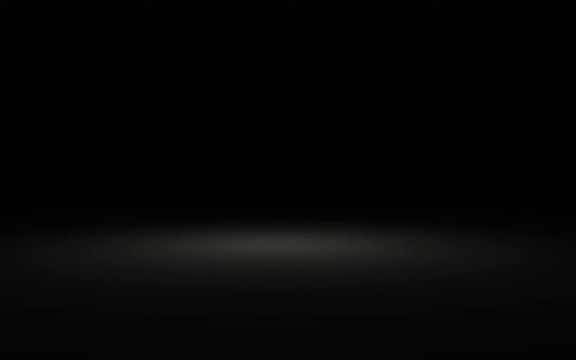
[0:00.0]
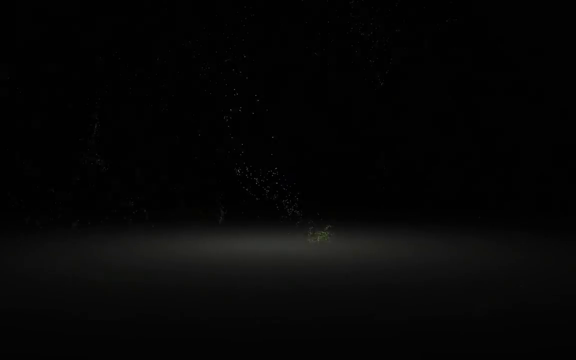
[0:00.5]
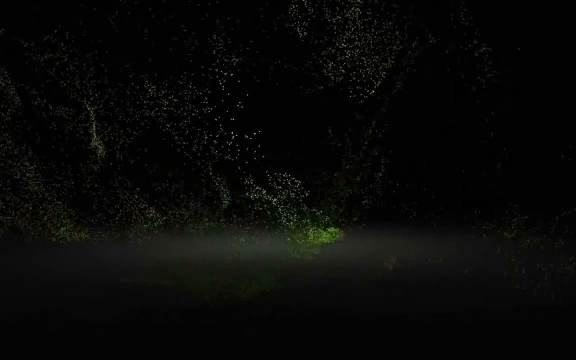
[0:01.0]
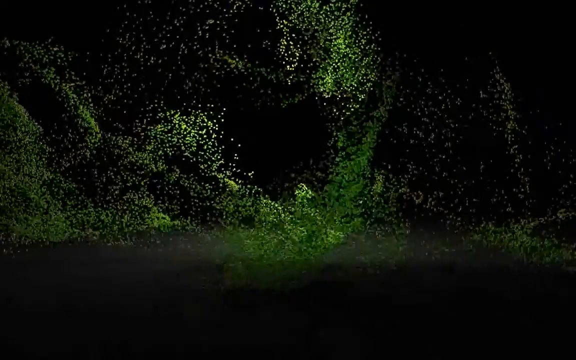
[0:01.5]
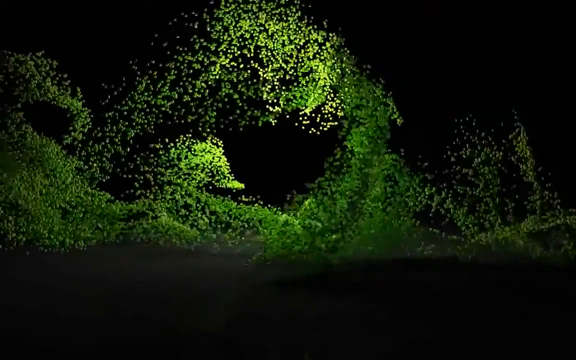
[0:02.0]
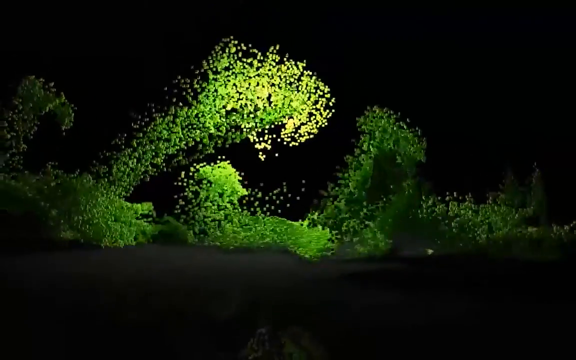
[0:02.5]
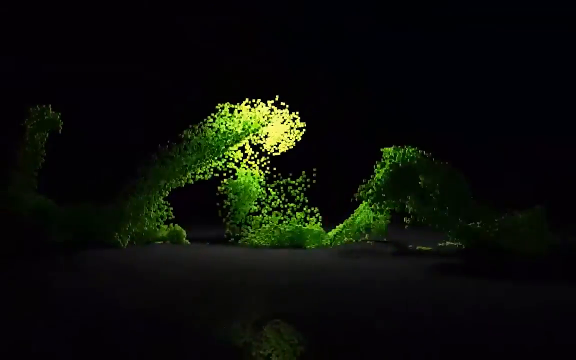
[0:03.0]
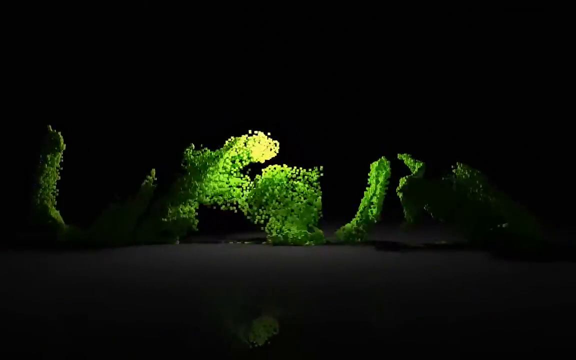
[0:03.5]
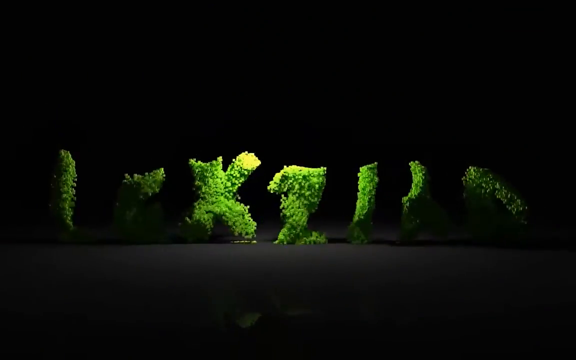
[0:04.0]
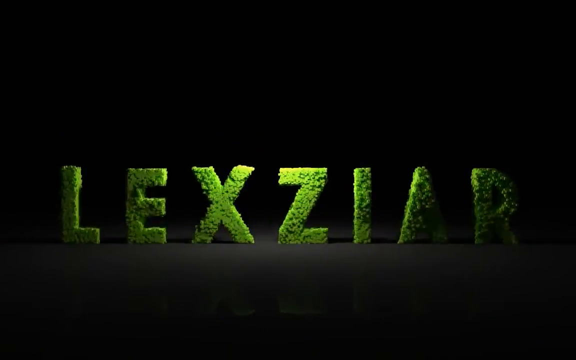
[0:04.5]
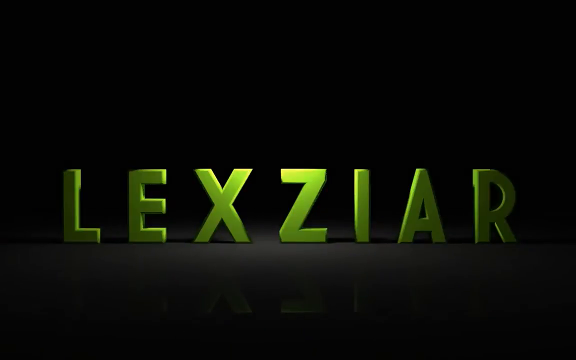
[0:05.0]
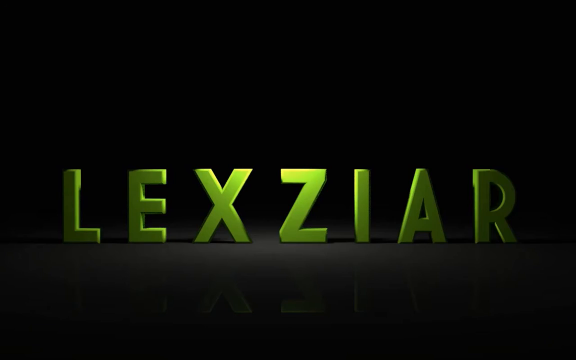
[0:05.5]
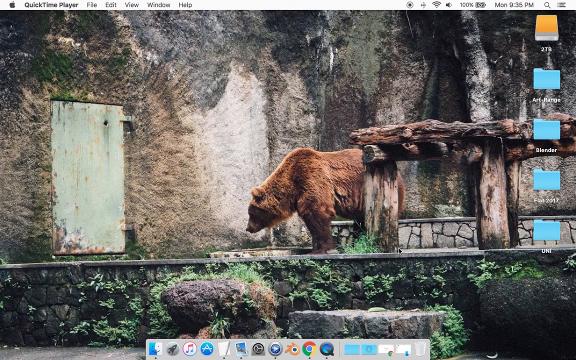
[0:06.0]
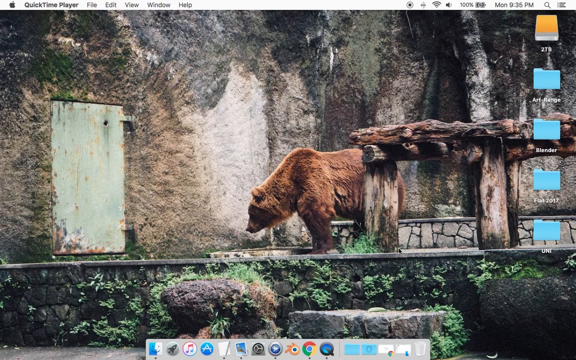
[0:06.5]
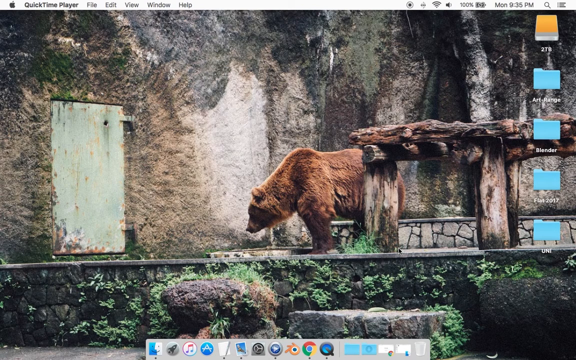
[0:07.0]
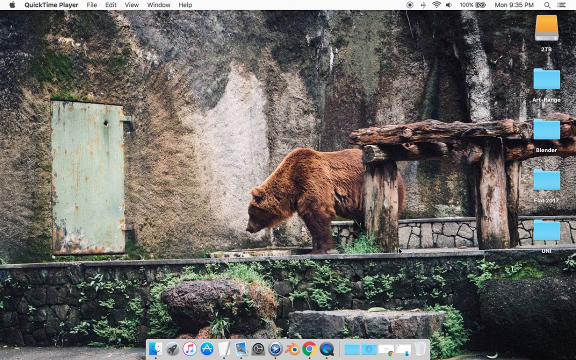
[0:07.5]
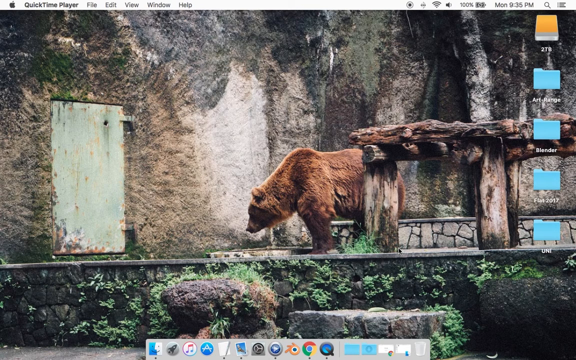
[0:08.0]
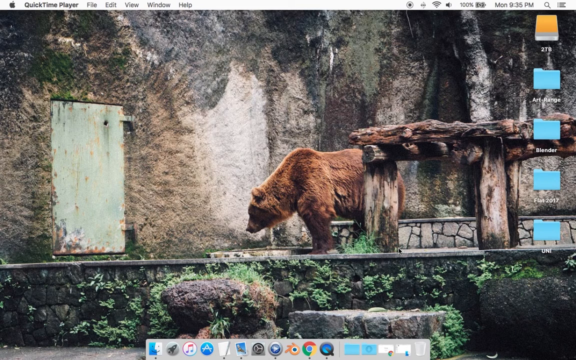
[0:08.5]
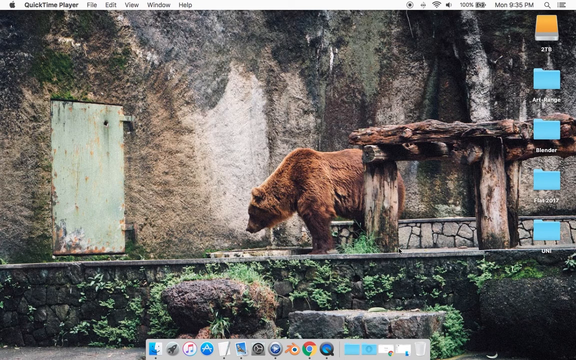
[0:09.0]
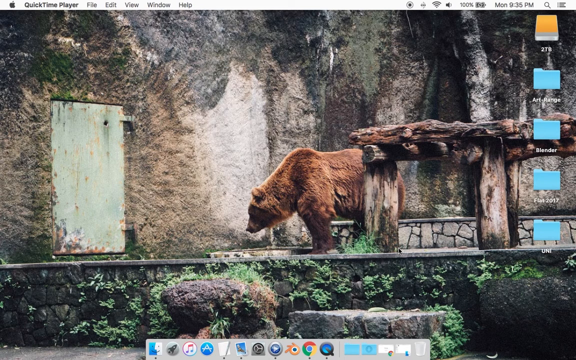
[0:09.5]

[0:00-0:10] The video opens on a black background where small green particles appear and form the word "Lexziar". Next comes what looks like a desktop on a Mac computer. The background image is of a brown bear that appears to be in some kind of old, worn-down-looking enclosure, standing on a small wooden platform, with walls that look kind of like a rock material. The bear is seen from the side, on all four legs. A few files and folders are on the right side of the screen.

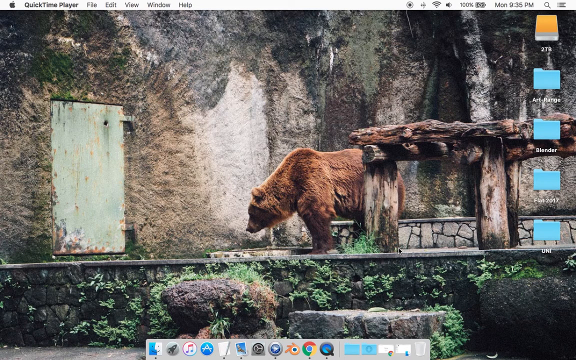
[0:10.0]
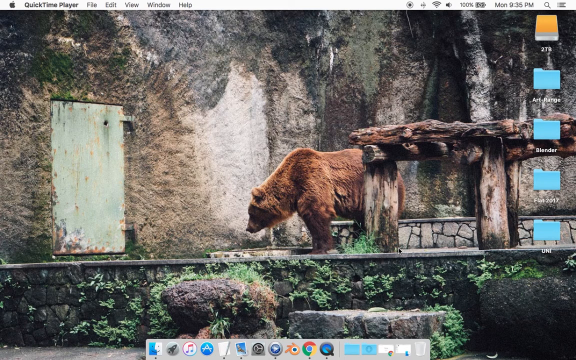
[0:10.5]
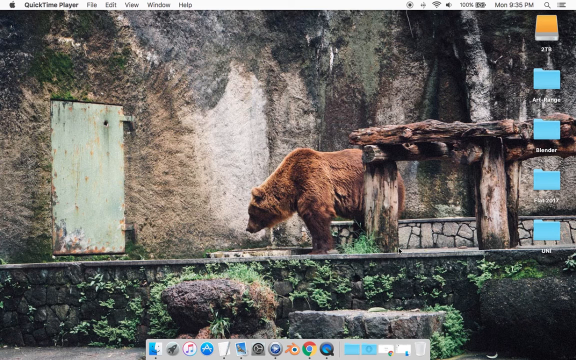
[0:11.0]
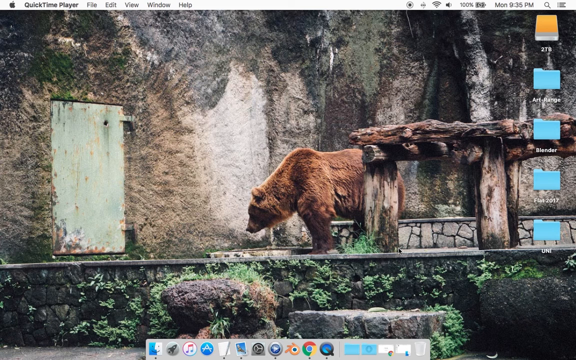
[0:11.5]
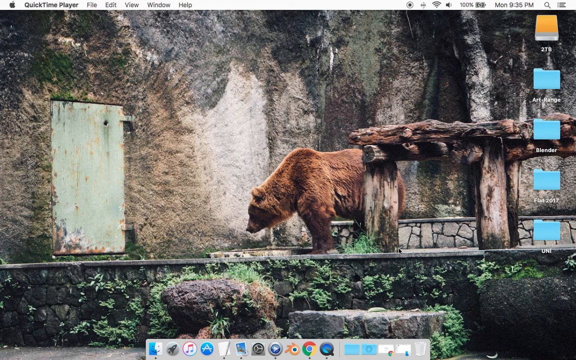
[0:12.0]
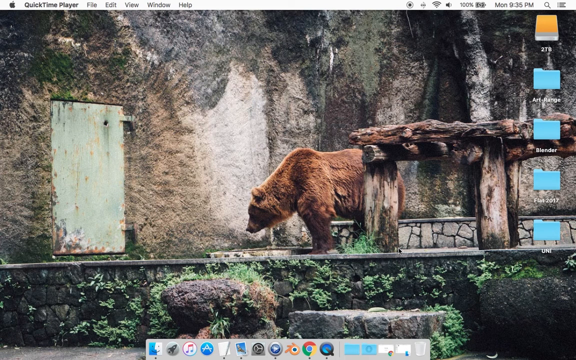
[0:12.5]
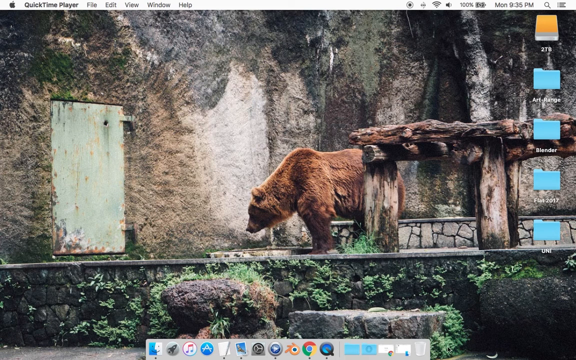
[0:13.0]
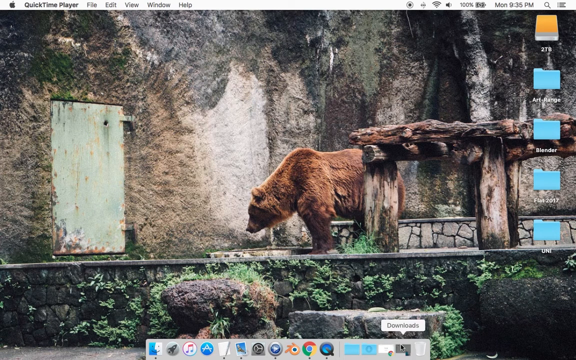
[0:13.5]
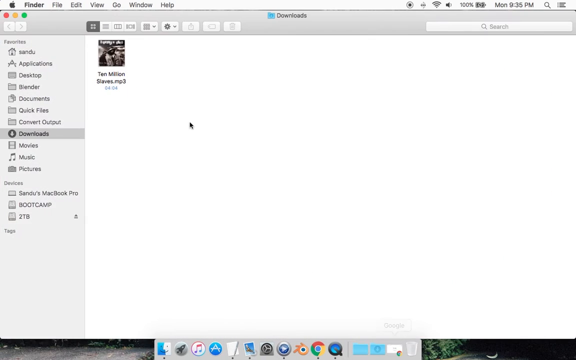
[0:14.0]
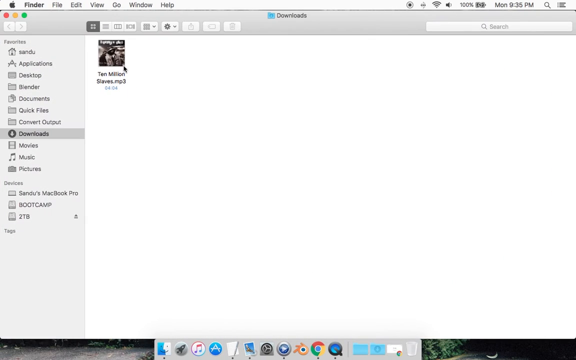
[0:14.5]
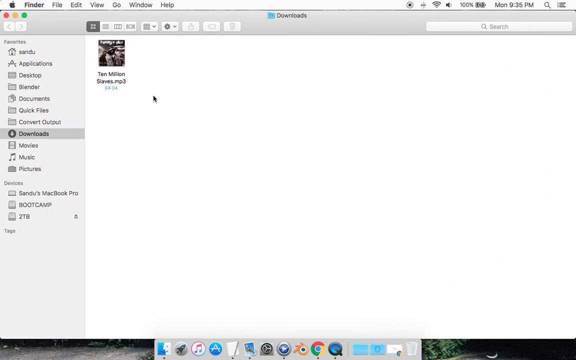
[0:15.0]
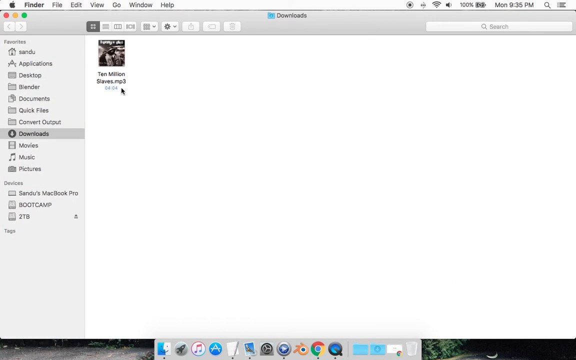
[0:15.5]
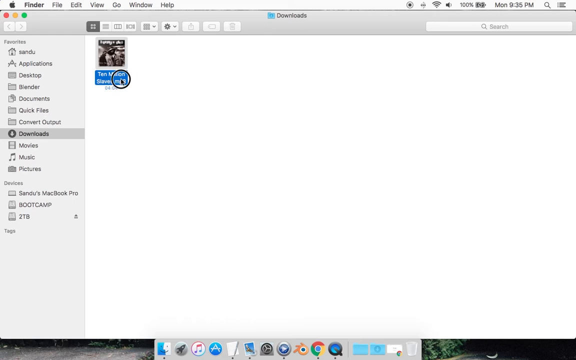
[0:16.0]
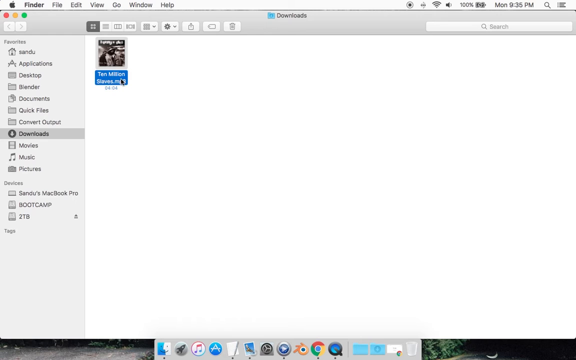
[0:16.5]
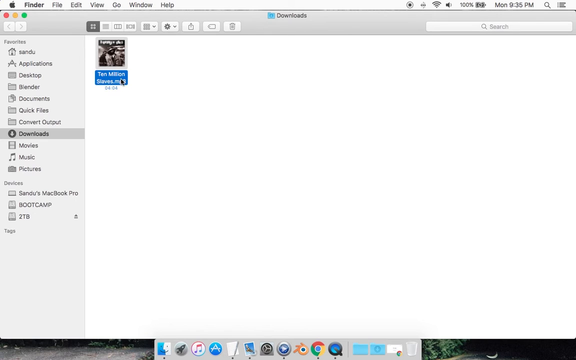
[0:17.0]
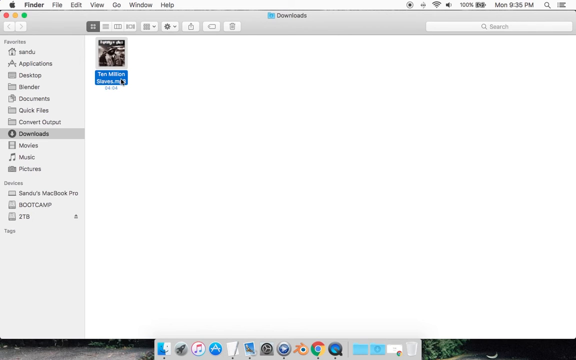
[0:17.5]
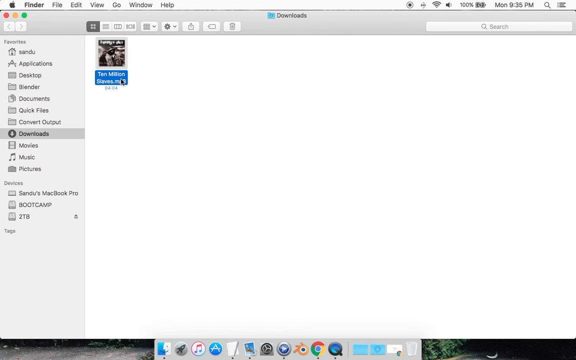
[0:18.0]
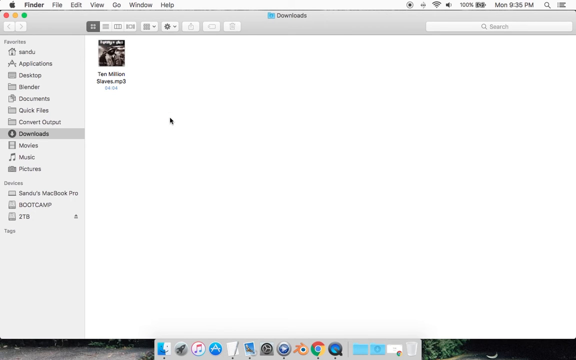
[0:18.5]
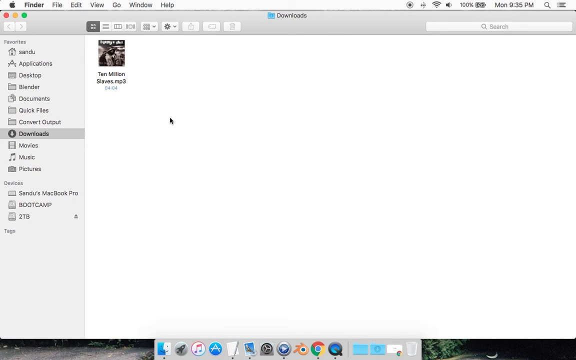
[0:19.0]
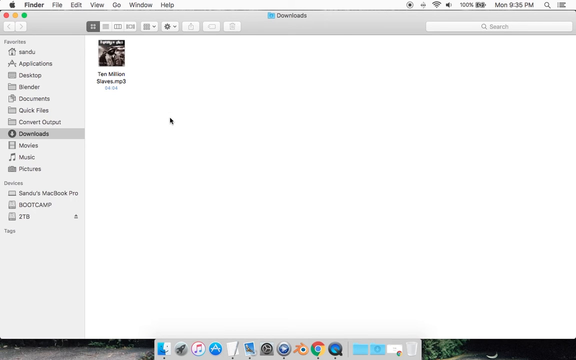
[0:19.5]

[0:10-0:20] A desktop on a Mac computer shows a background image that looks like a brown bear in some type of enclosure with brown rock walls and a wooden platform that it is standing on. On the right side of the screen are four folders and one icon that looks like a gray rectangle with yellow on top. The cursor moves down to the systems tray menu and clicks the Download folder, which opens a window for the downloads folder. It contains one file, which seems to be an mp3 file titled "10 million slaves". The user selects the file, and a small pop-up appears showing the album cover, the title, the album name and the time duration of the file. At the bottom there is something like a backwards and forwards play button, but the window quickly disappears.